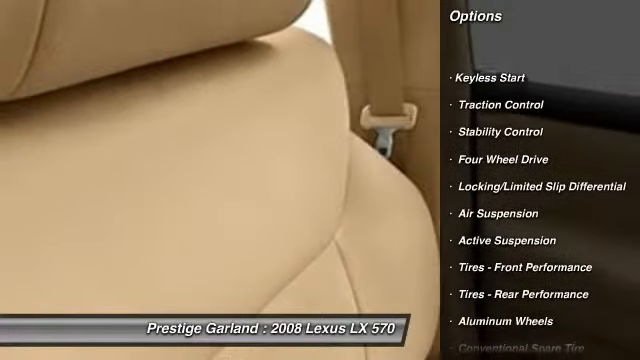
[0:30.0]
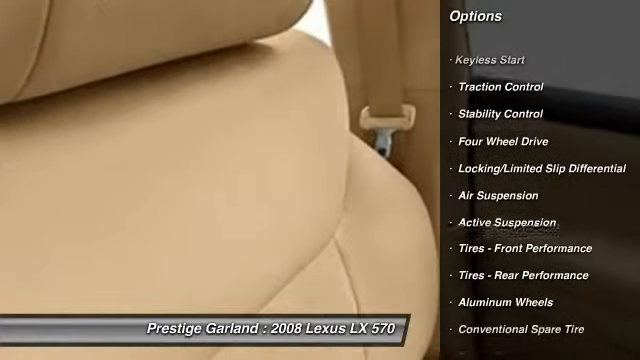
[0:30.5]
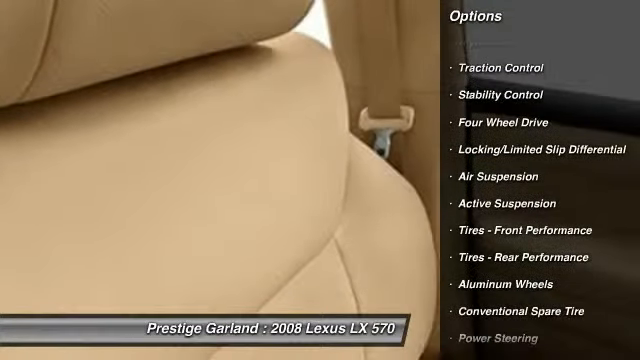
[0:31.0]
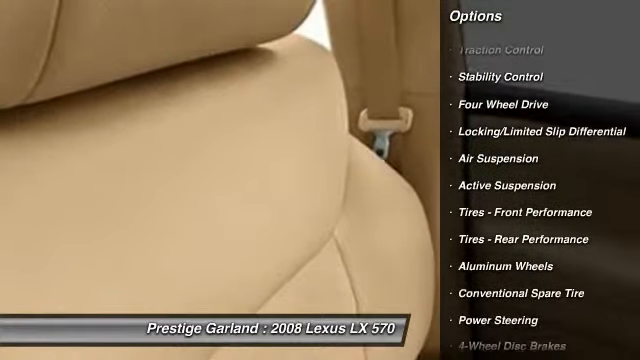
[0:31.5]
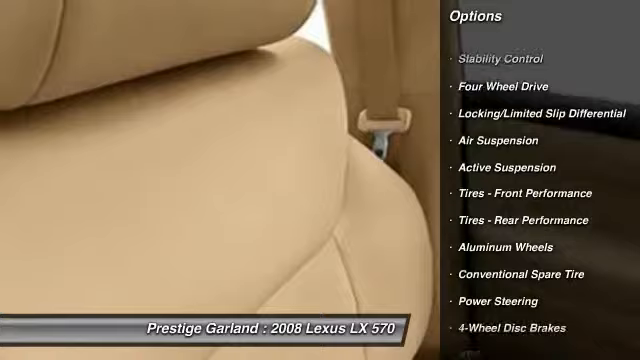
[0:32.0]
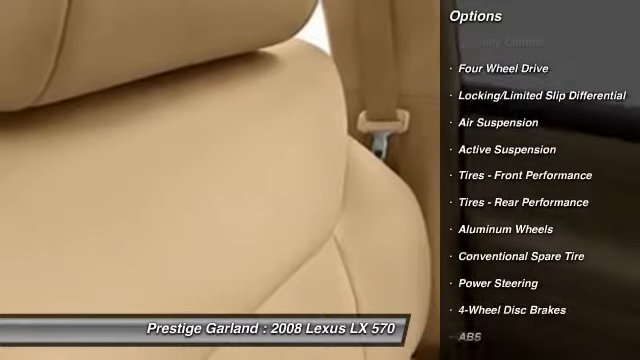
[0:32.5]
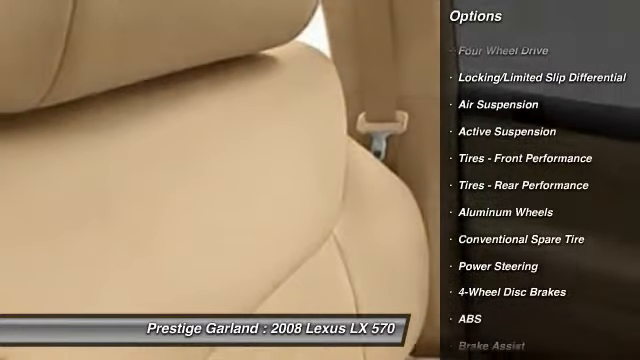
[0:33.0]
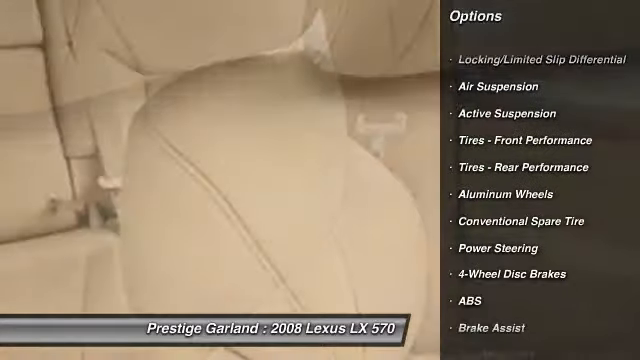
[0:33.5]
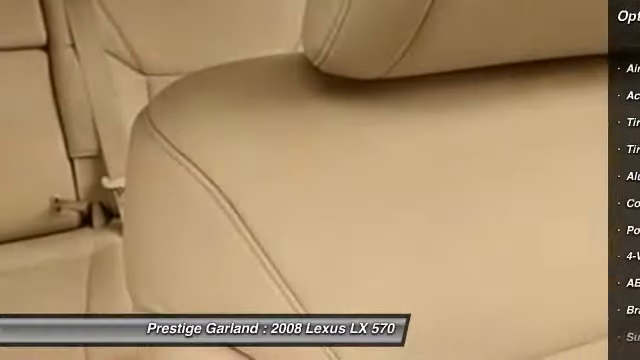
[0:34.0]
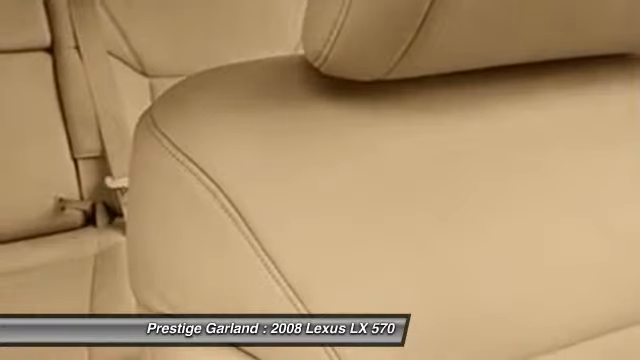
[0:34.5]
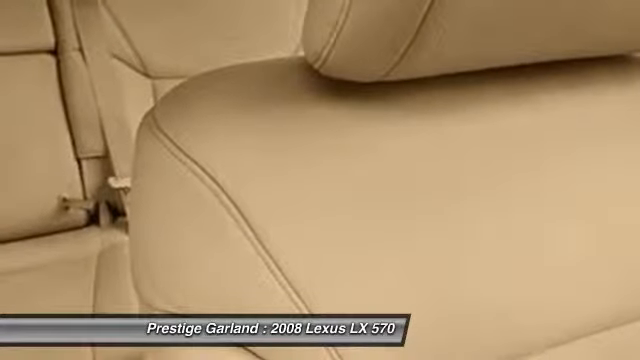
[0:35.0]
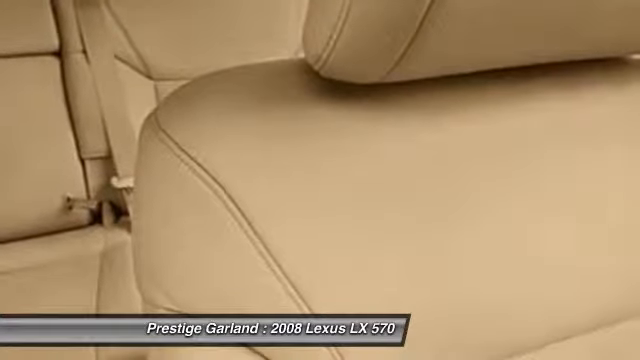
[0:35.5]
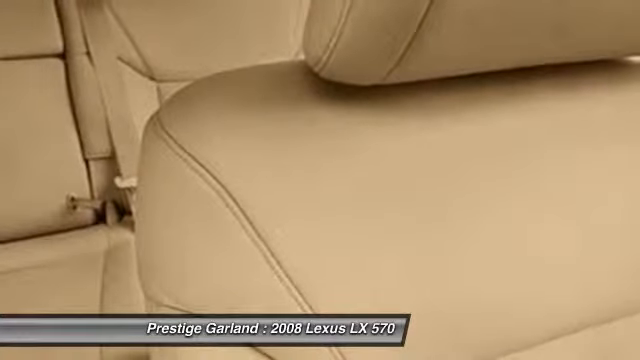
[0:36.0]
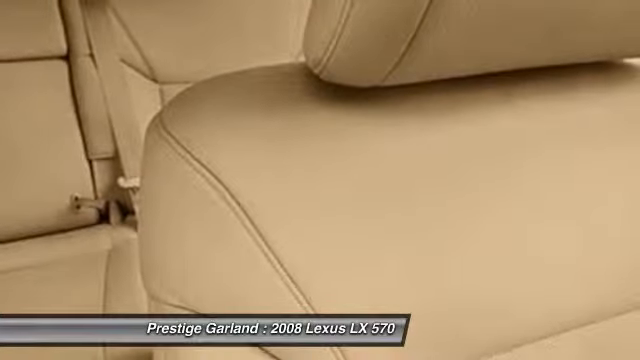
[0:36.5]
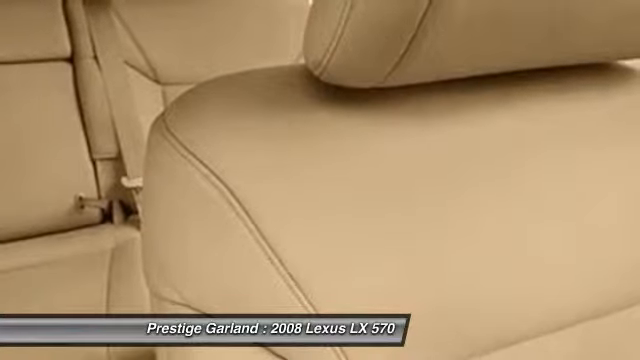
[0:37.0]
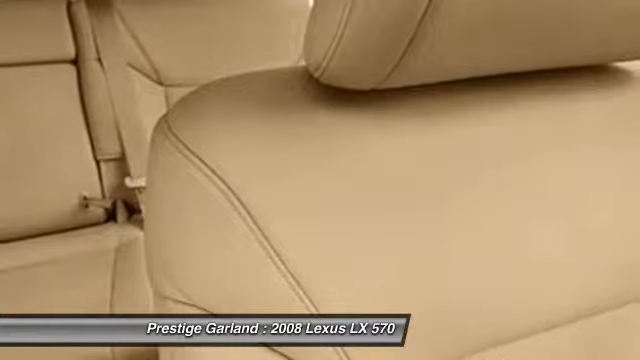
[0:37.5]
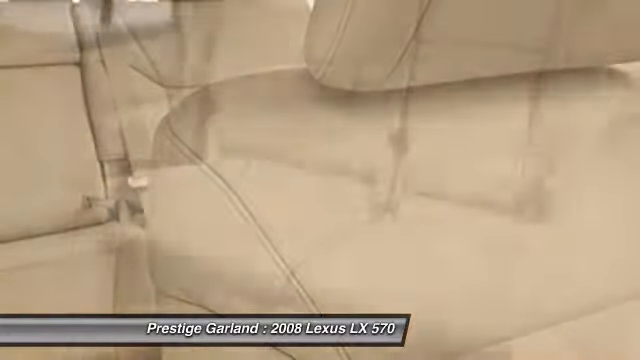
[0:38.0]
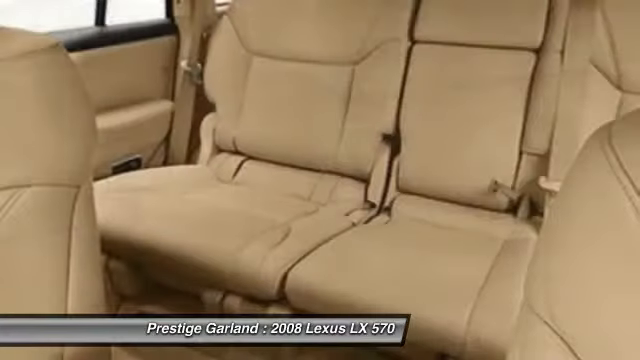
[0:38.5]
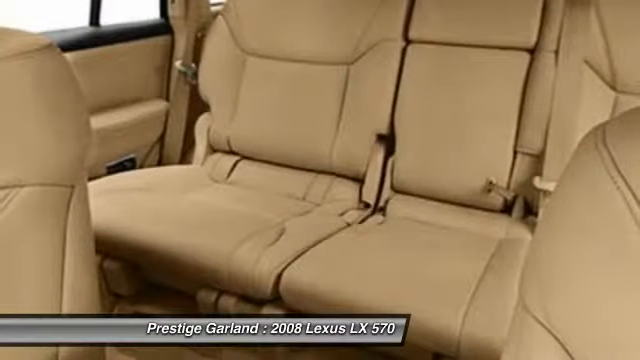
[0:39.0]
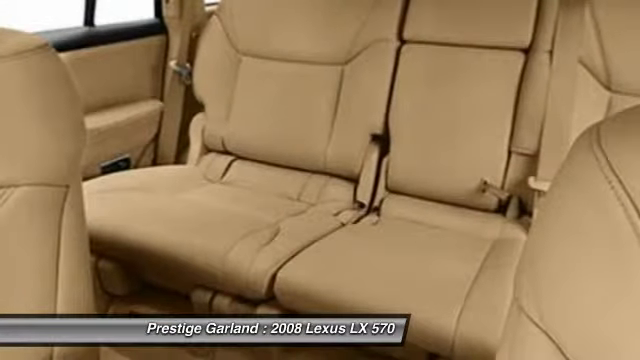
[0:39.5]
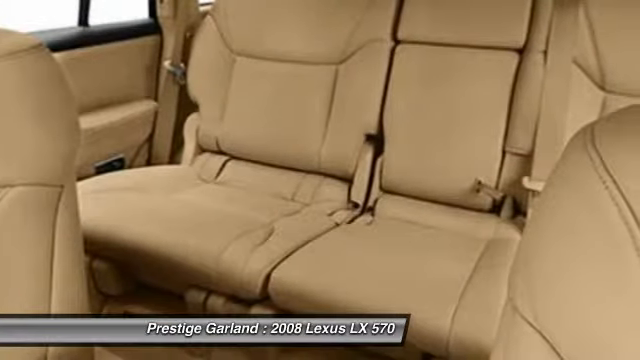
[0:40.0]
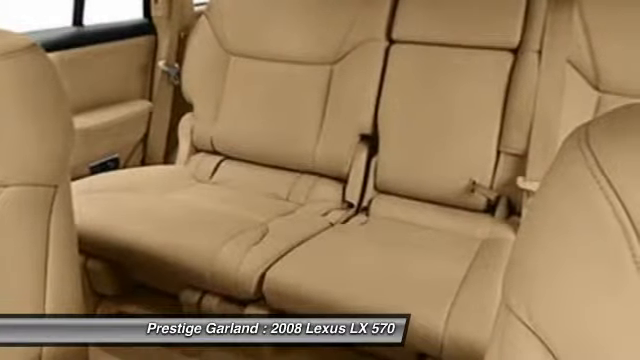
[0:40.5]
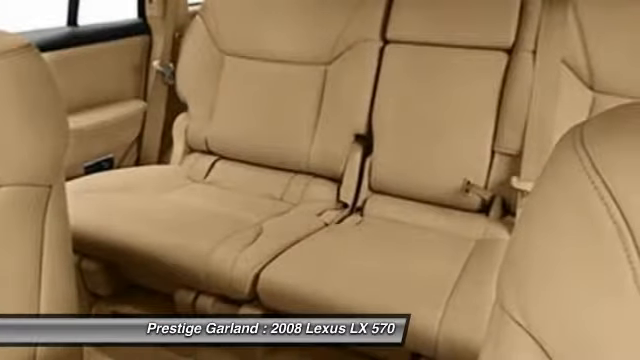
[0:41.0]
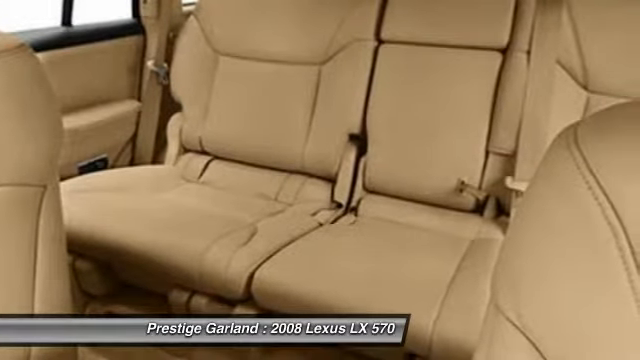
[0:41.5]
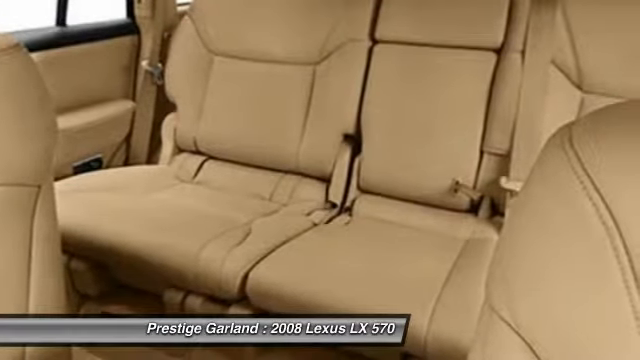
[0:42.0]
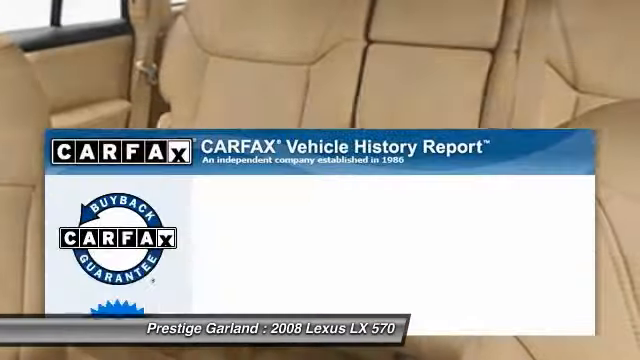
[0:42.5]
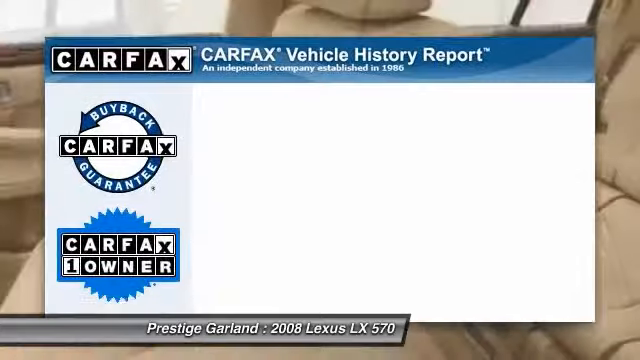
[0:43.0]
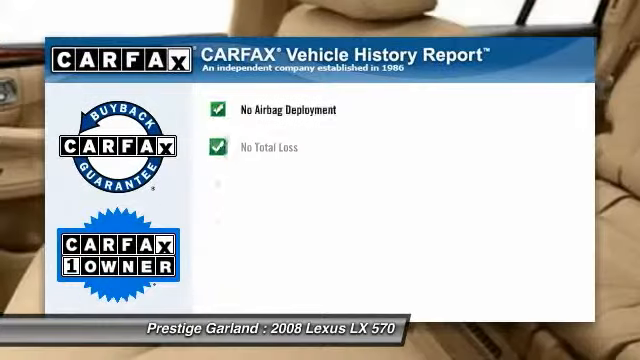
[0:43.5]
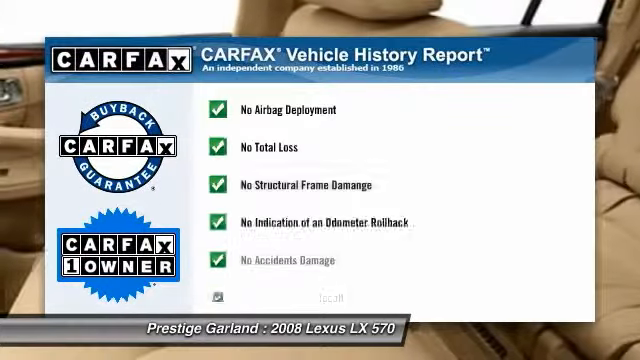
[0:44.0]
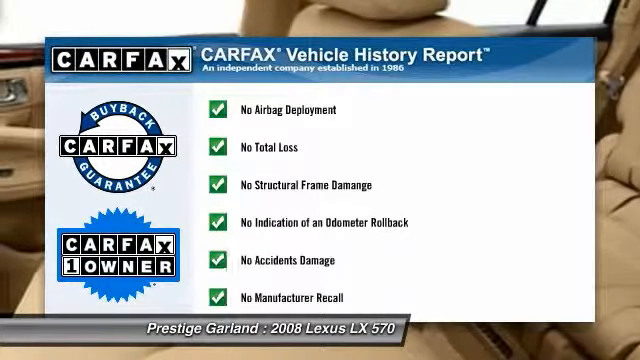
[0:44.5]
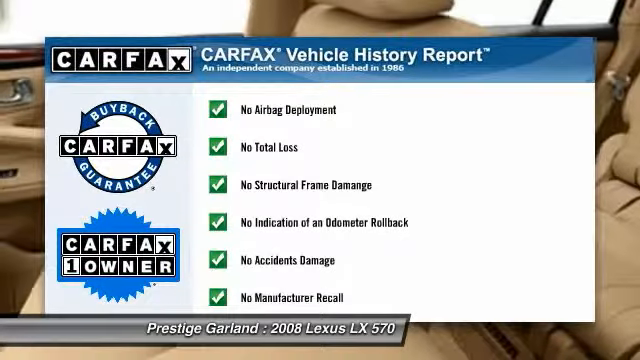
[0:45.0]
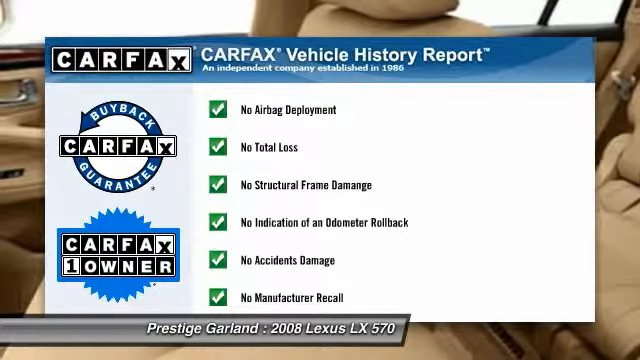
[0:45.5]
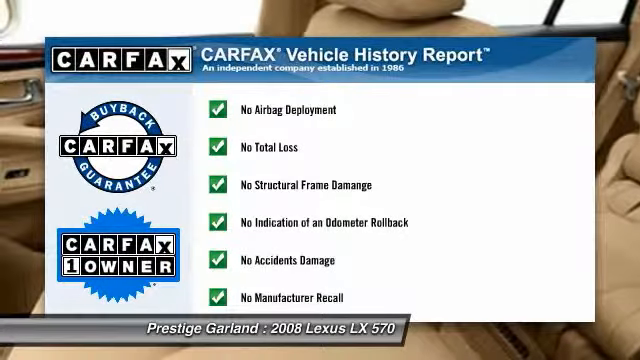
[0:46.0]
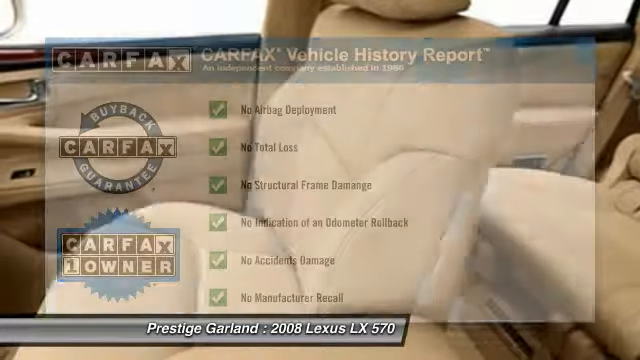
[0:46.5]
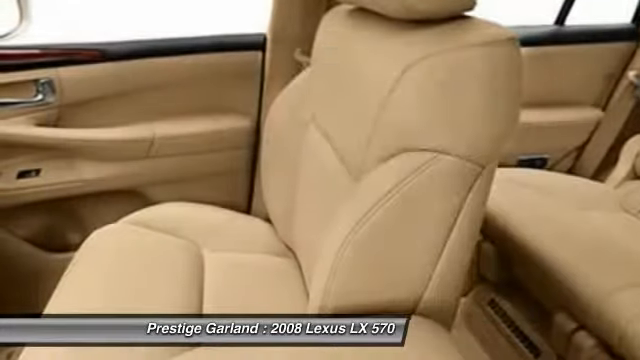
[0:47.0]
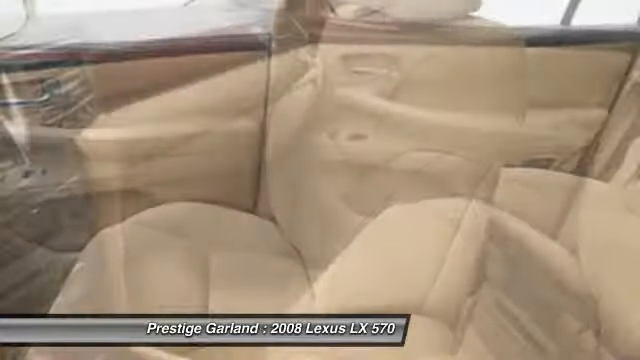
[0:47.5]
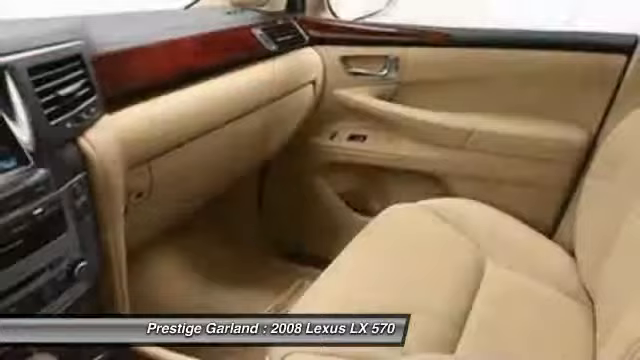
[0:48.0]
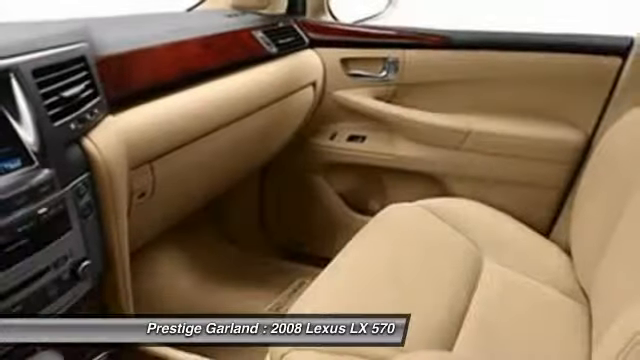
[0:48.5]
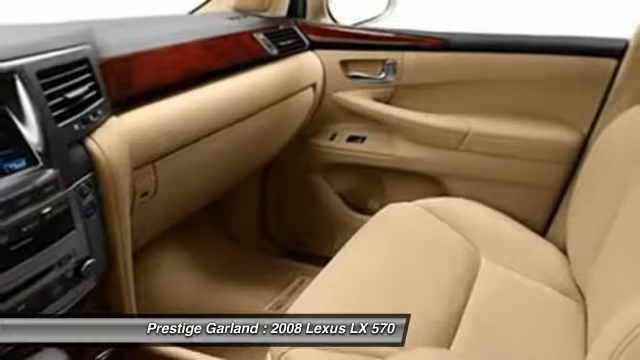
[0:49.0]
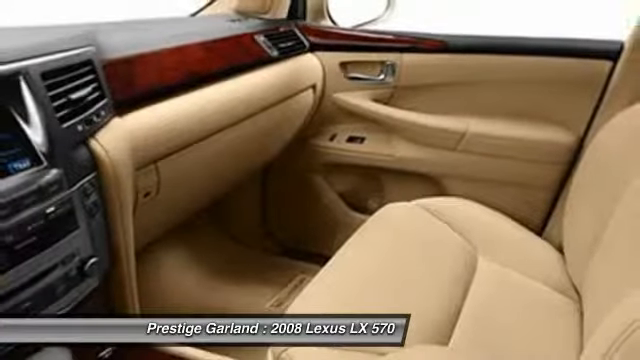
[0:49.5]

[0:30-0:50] A close-up shows a seat inside the car, which is a dark gold color, with the seatbelt visible in the background. On the right-hand side is a black box with "options" in white at the top, and bullet points scroll from the bottom up listing the options: "Keyless Start", "Traction Control", "Stability Control", "4-Wheel Drive", "Locking", "Limited Slip Differential", "Air Suspension", "Active Suspension", "Tires Front Performance", "Tires Rear Performance", "Aluminum Wheels", "Conventional Spare Tire", "Power Steering", "4-Wheel Drive", "Disc Brakes", "ABS". The box then disappears and more shots of the seats follow, including the back seats. A CARFAX Vehicle History Report then pops up, listing items with check marks, such as "no airbag deployment", "no total loss", "no structural frame damage", "no indication of an odometer rollback", "no accidents damage", and "no manufacturer recall".